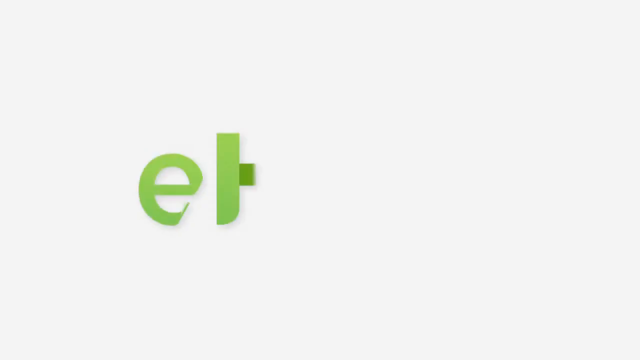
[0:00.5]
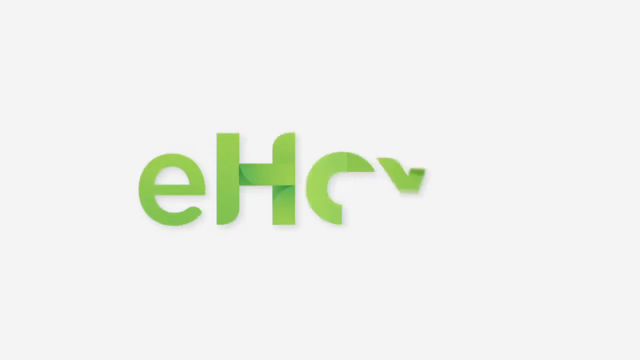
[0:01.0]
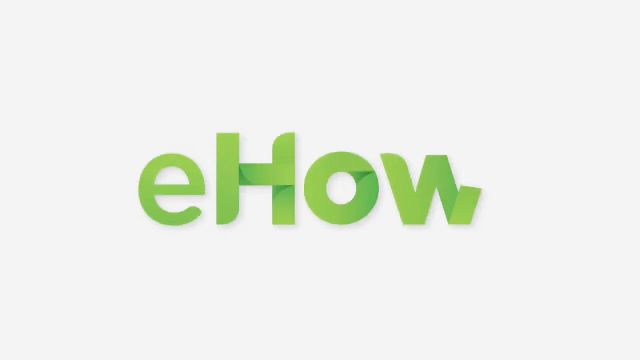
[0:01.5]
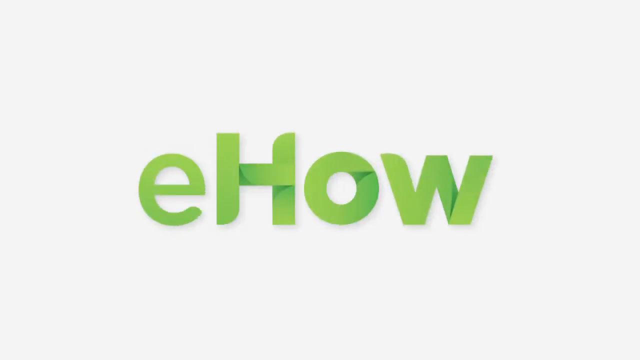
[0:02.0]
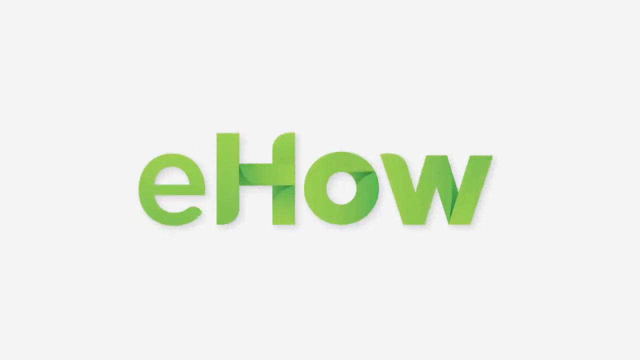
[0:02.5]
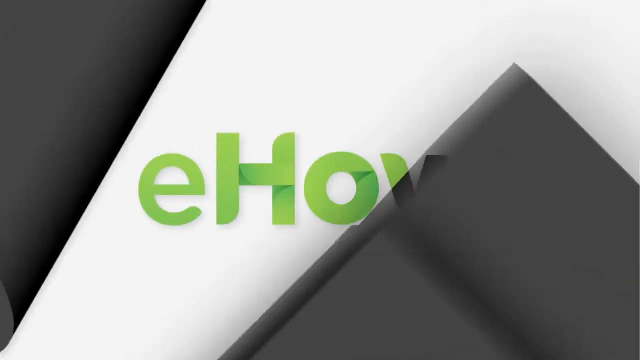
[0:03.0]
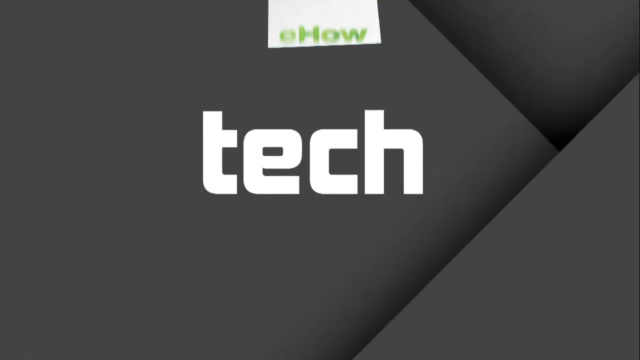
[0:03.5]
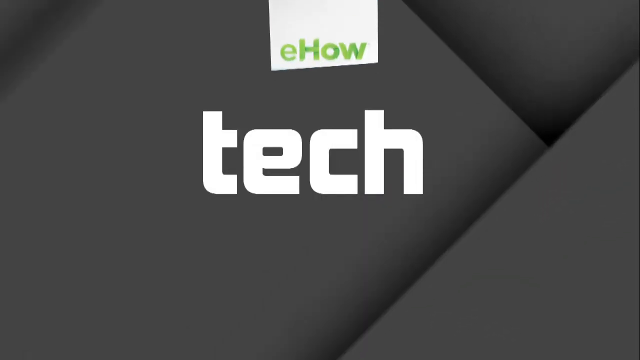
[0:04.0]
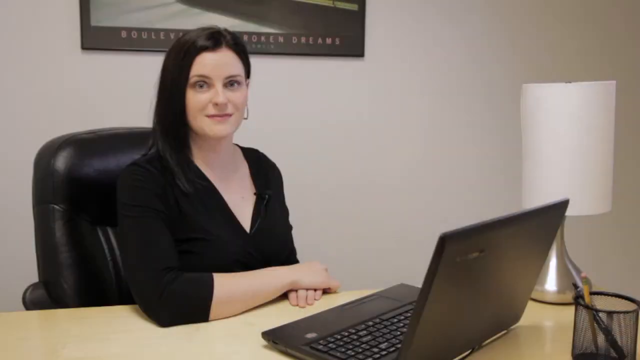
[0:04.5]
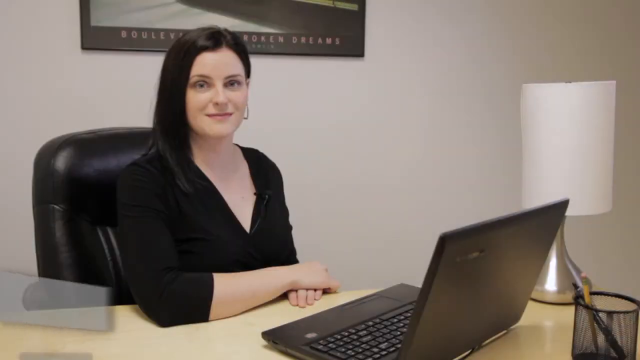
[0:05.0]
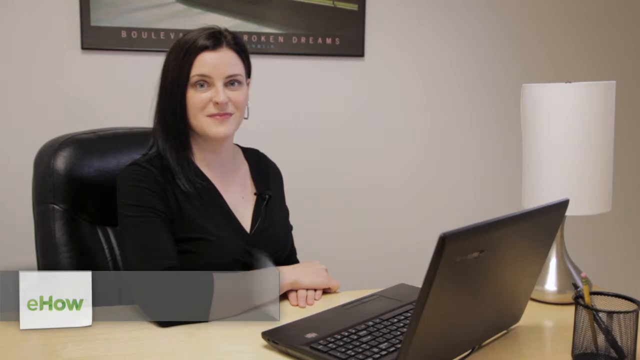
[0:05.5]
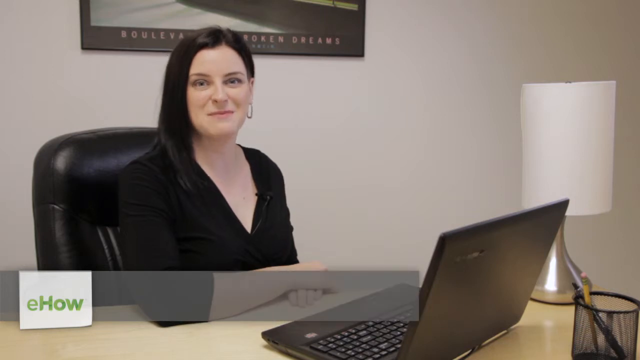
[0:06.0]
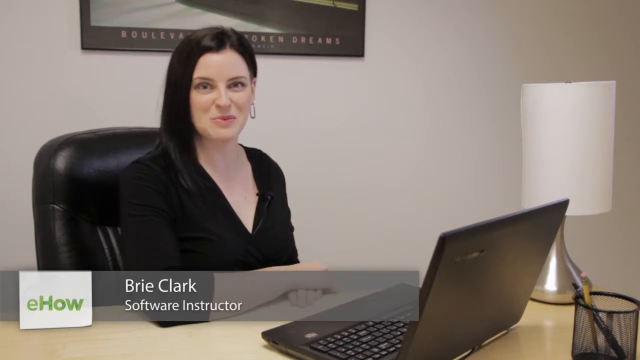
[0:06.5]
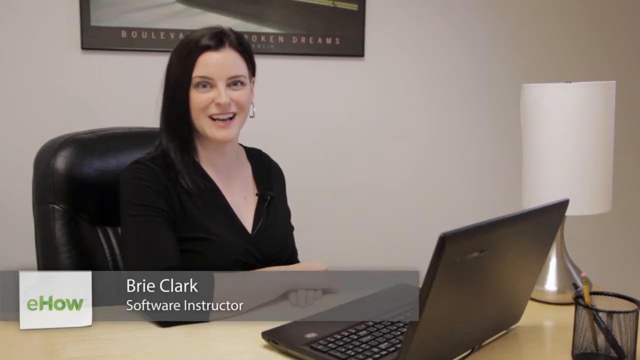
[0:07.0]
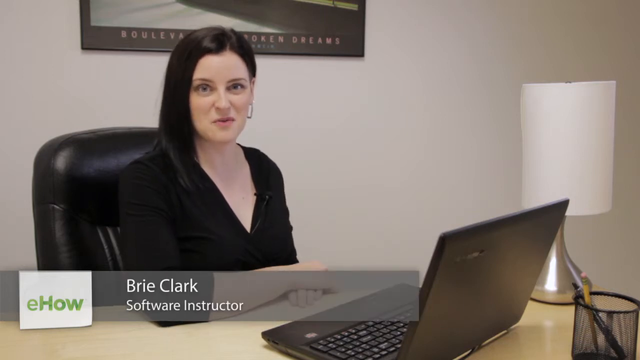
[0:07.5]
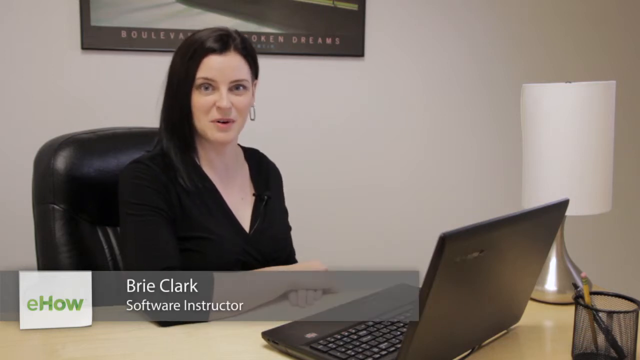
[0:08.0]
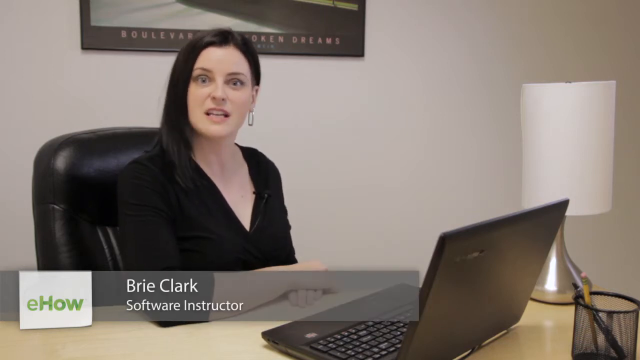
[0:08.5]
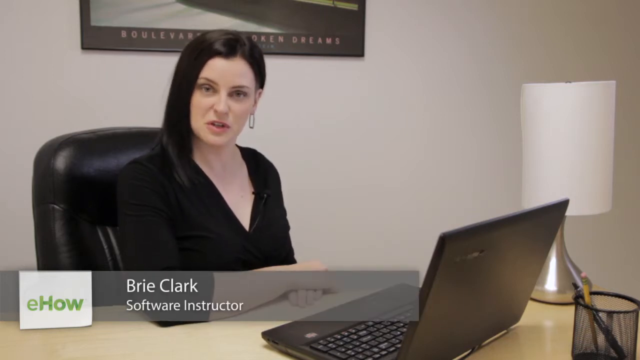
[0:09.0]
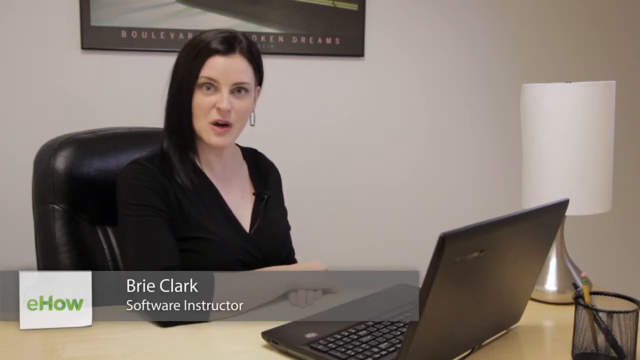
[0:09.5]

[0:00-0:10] At the very beginning, the word "ehow" appears in green or lime green, with a lowercase e, uppercase h, lowercase o and lowercase w. The next screen says "tech" with "ehow" on top of it; "tech" is in black lettering and "ehow" is in white. A woman with dark hair, apparently about 35 years old, is sitting at a desk with a black chair behind her. She has an earring in her left ear; her right ear cannot be seen. Her hands are folded, the left hand underneath and the right hand on top. There is a black computer, and a pencil holder and pen holder are in front of her, on the other side of the computer away from her. A picture is in the background, and it looks like it says "Boulevard of Broken Dreams". Her name is Brie Clark, and she is a software instructor.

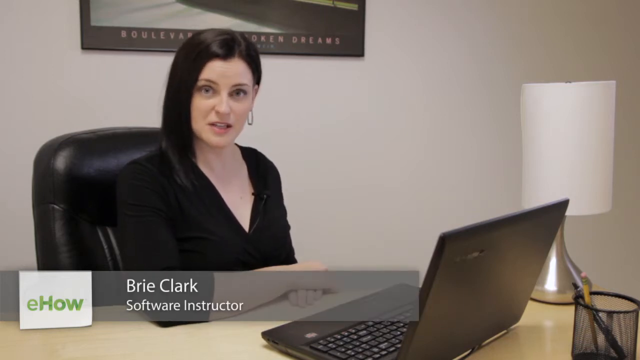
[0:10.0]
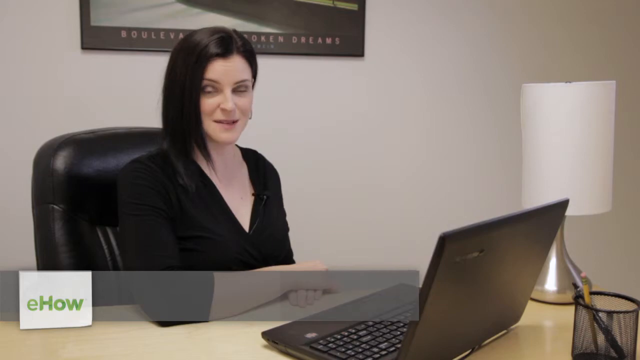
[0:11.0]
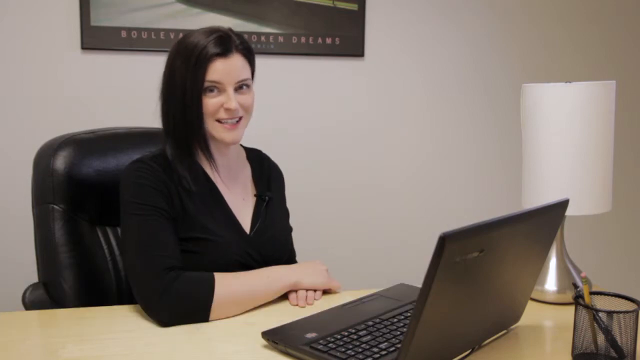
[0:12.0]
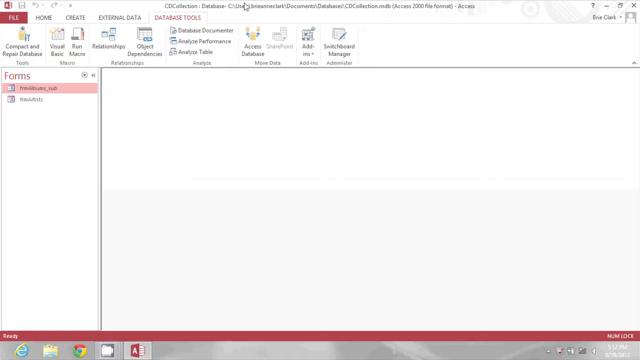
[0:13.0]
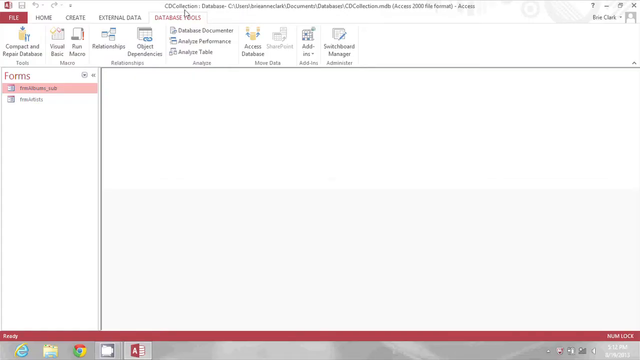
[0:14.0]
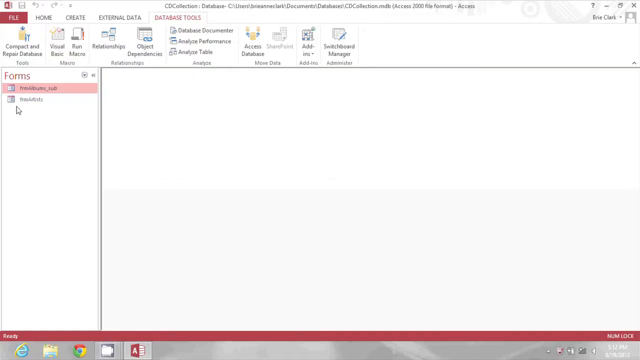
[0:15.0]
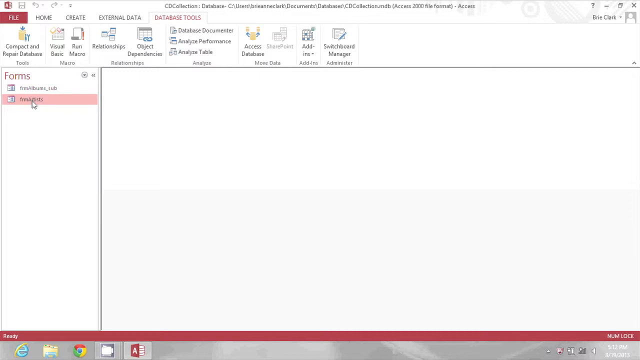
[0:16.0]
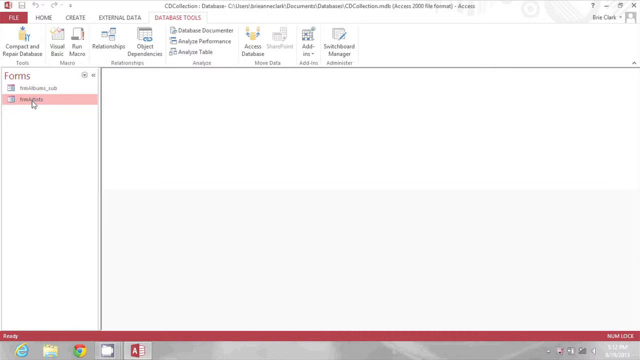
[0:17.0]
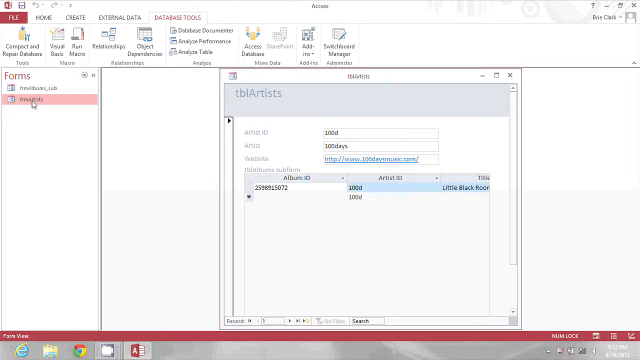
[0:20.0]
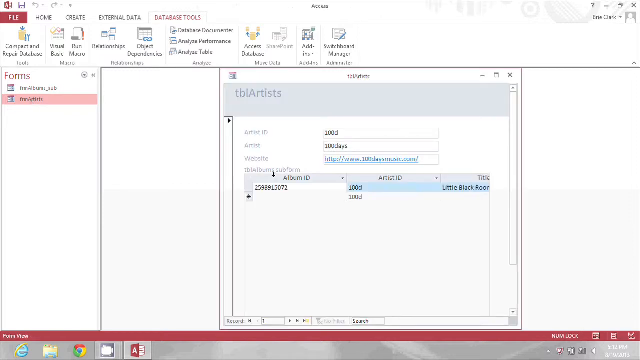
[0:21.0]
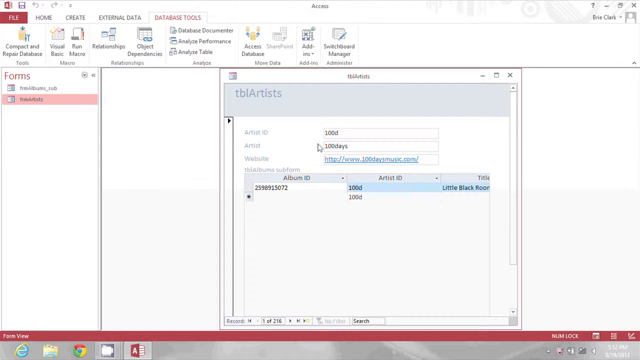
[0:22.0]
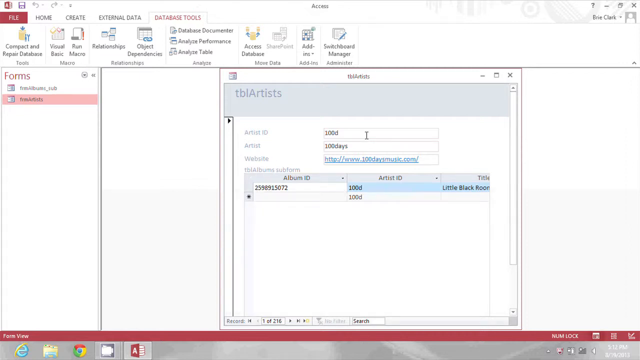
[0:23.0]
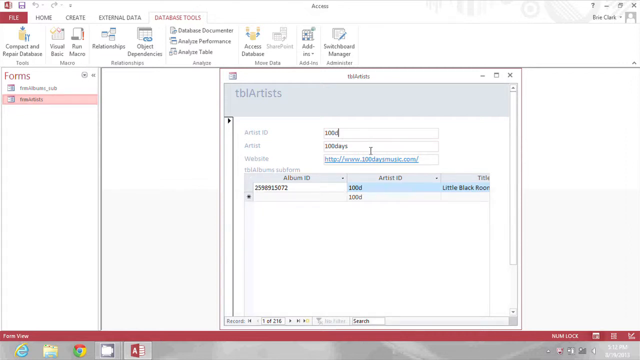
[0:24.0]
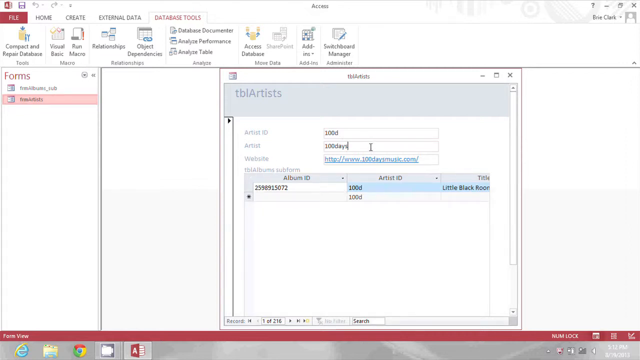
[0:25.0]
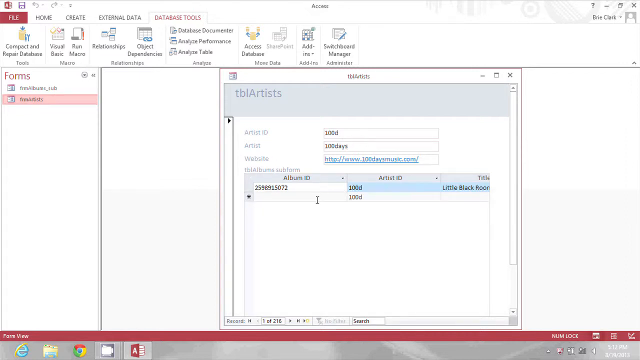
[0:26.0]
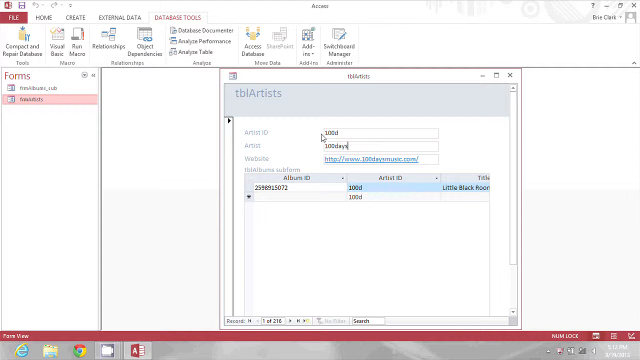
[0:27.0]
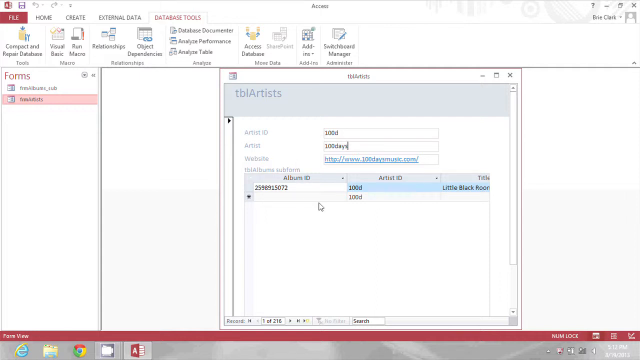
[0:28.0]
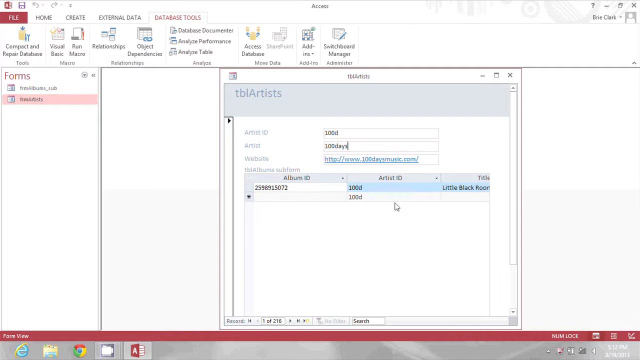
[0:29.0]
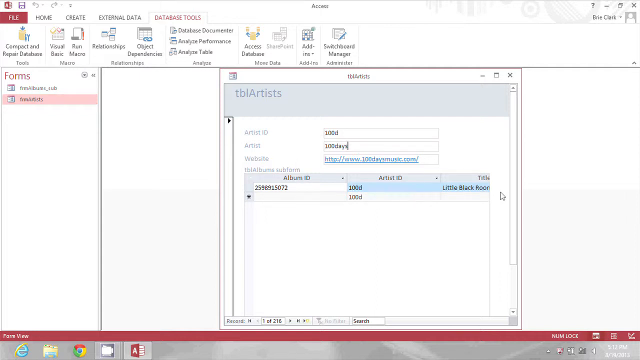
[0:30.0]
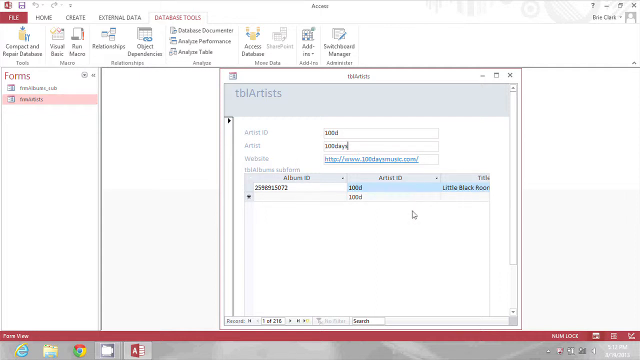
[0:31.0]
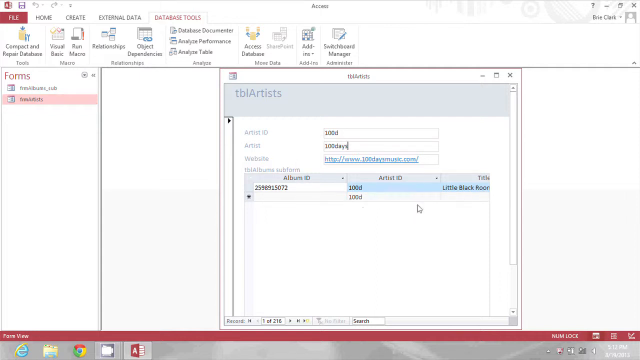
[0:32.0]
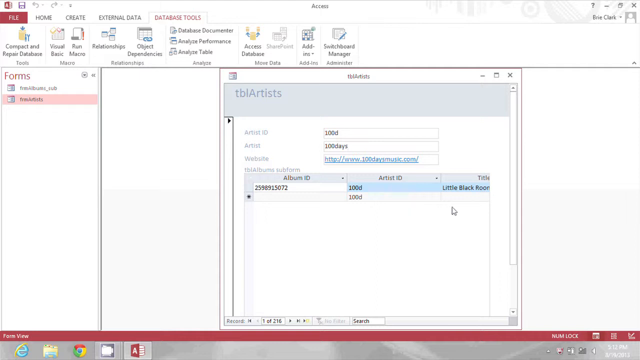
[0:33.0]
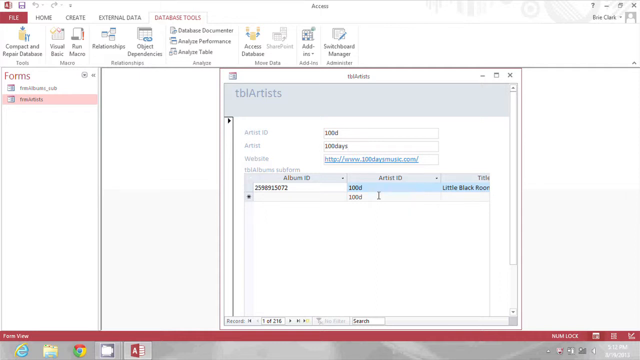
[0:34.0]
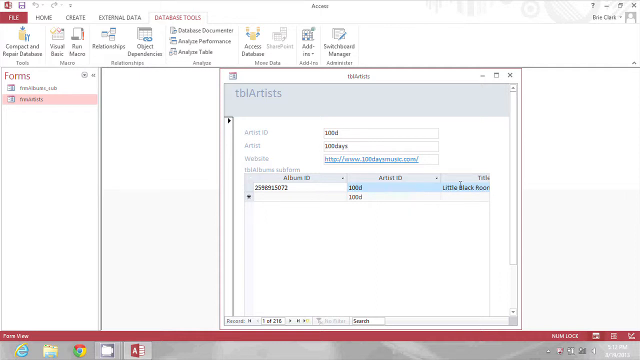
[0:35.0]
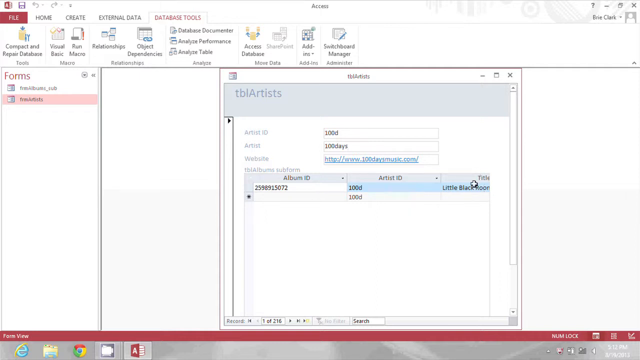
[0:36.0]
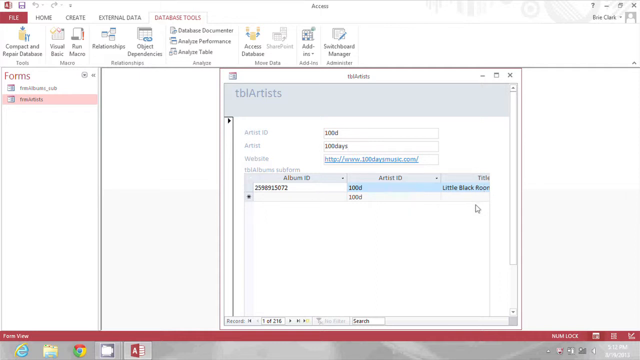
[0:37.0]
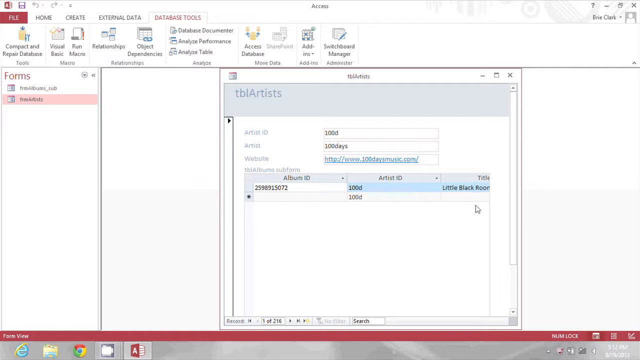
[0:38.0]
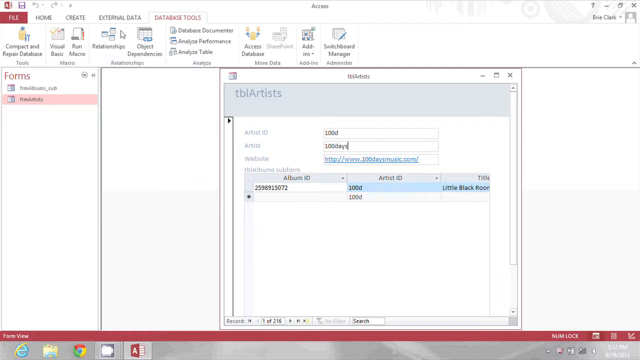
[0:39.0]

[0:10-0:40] Brie Clark, with dark hair and a dark shirt, still has her hands folded with the right hand on top. The Boulevard of Broken Dreams picture is still in the background, along with a black chair, a black computer, and a black pencil or pen case holder on the other side of her computer, in front of it. There is a silver lamp with a white lampshade in the background. She talks to the camera, then flips onto a computer page that says "TBL Artists", with a lowercase "TBL" and a capital A. Not much else on the page can be seen. She moves her cursor around and around, showing different things on the site, though what she is clicking on cannot quite be seen. She is a software instructor at ehow, and is a fairly attractive woman.